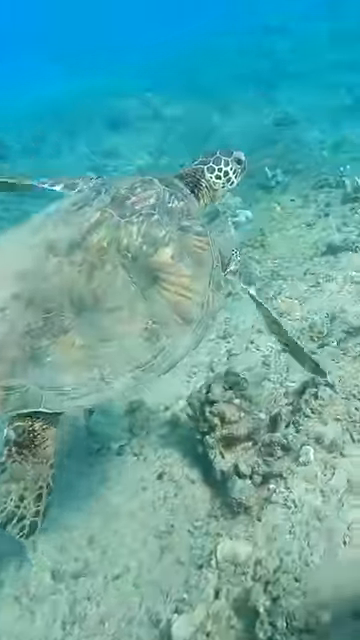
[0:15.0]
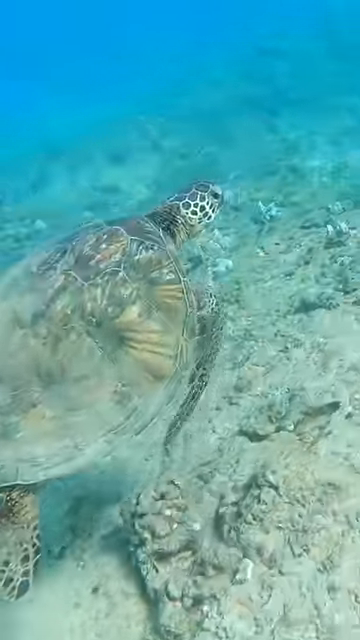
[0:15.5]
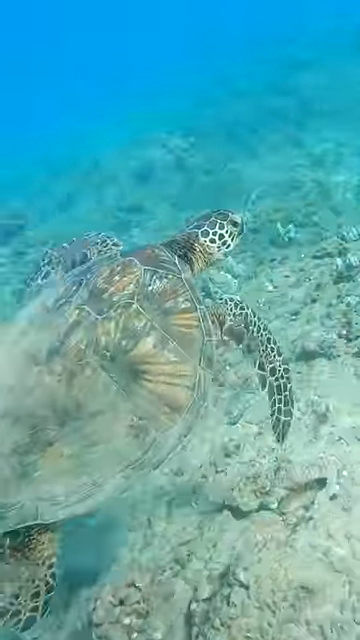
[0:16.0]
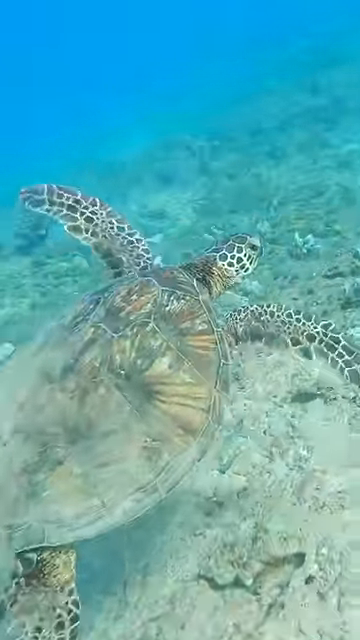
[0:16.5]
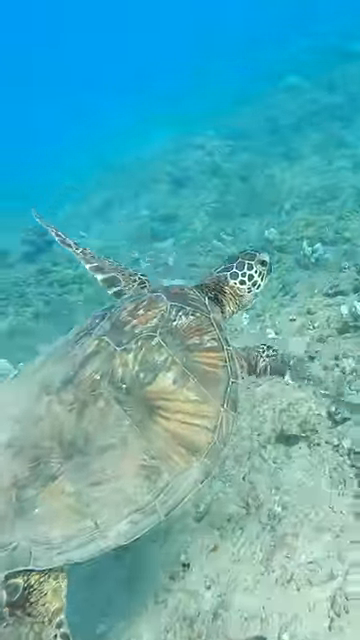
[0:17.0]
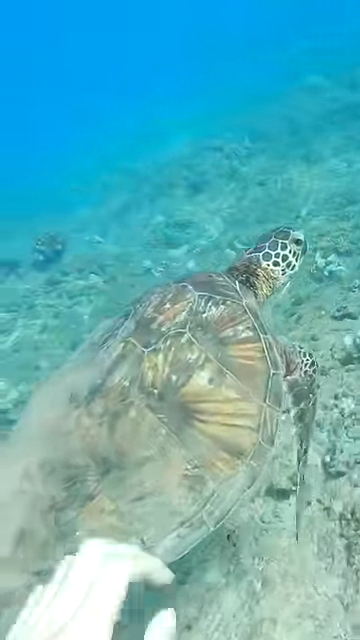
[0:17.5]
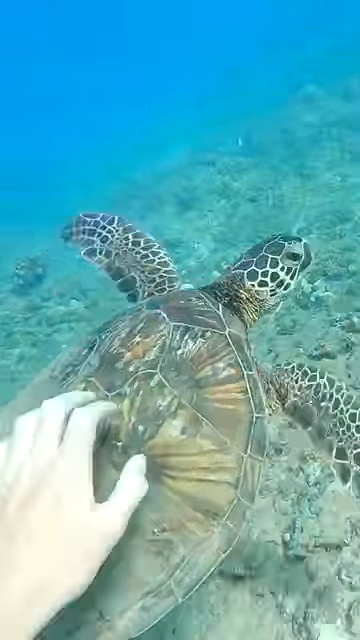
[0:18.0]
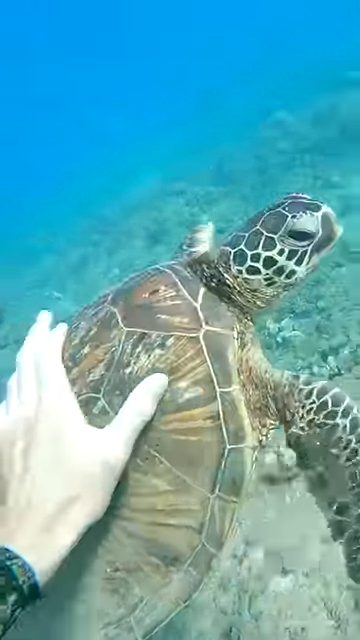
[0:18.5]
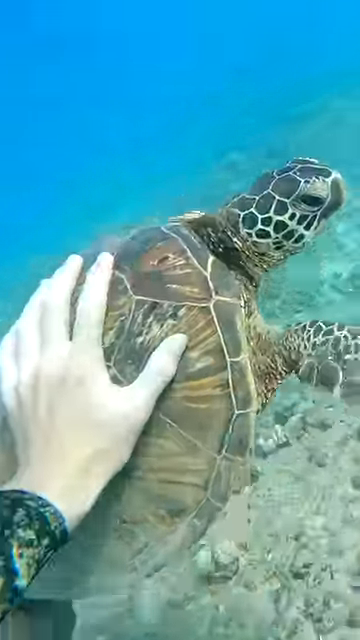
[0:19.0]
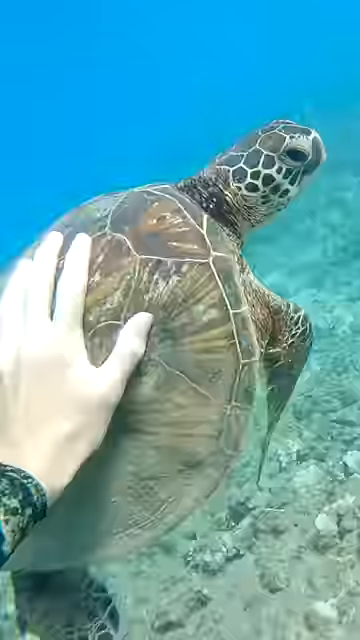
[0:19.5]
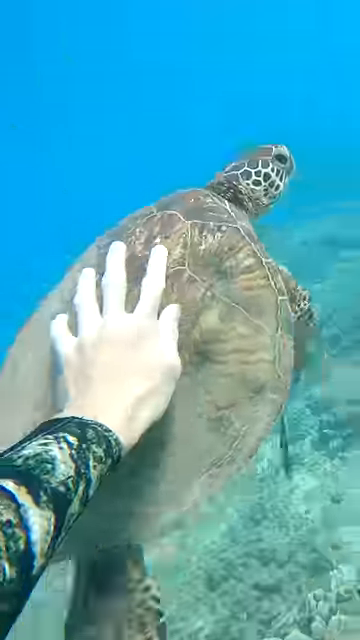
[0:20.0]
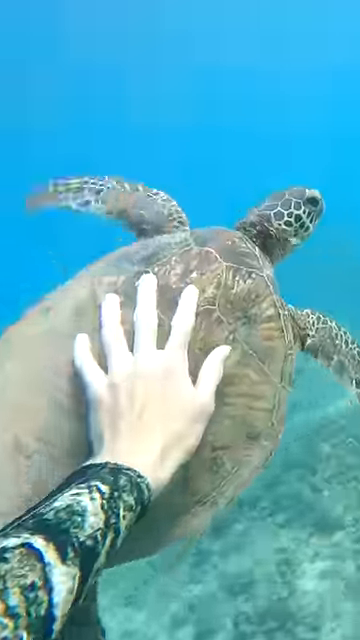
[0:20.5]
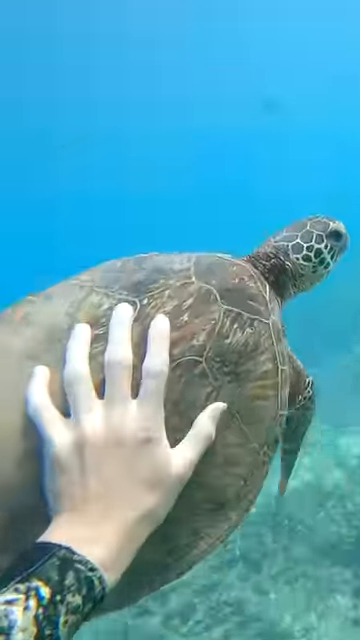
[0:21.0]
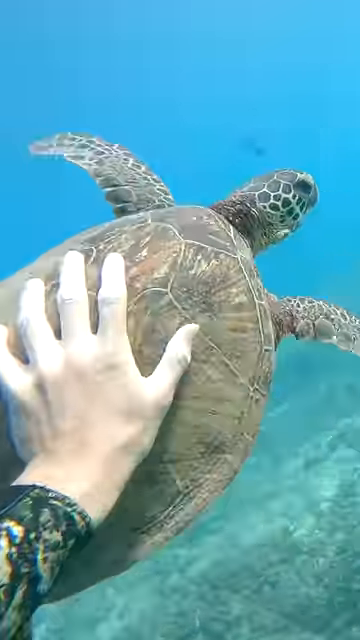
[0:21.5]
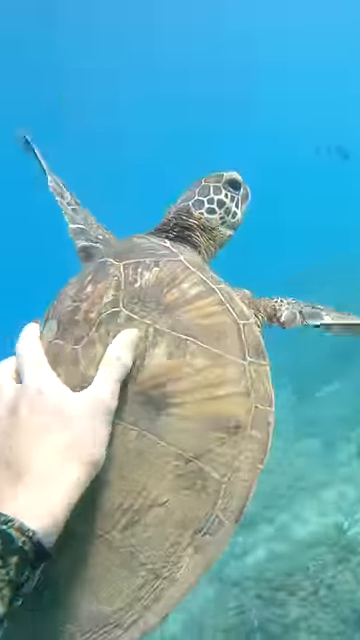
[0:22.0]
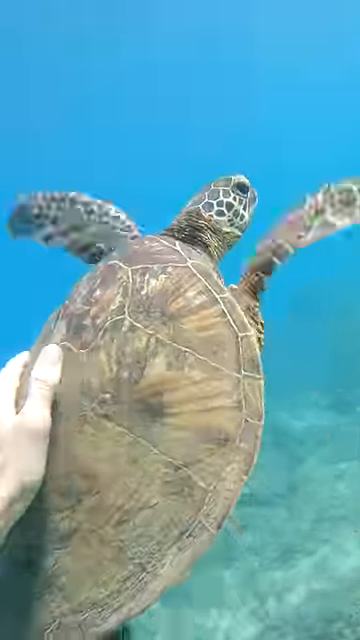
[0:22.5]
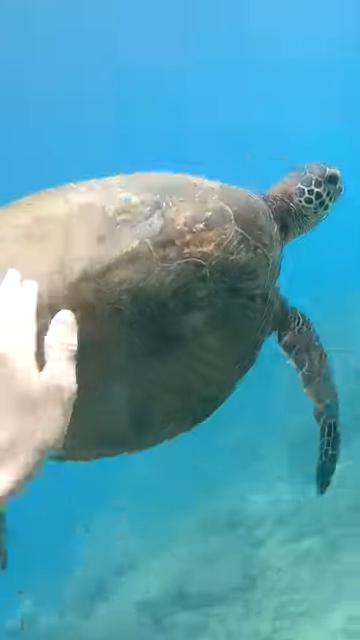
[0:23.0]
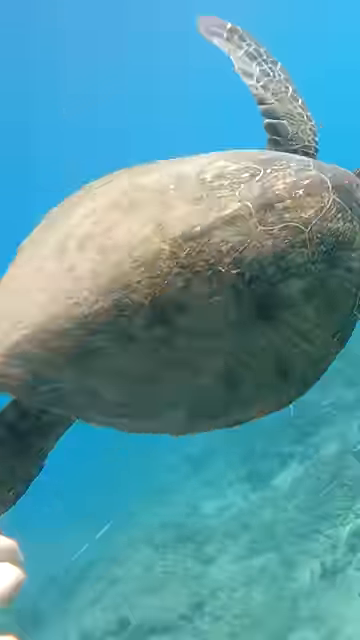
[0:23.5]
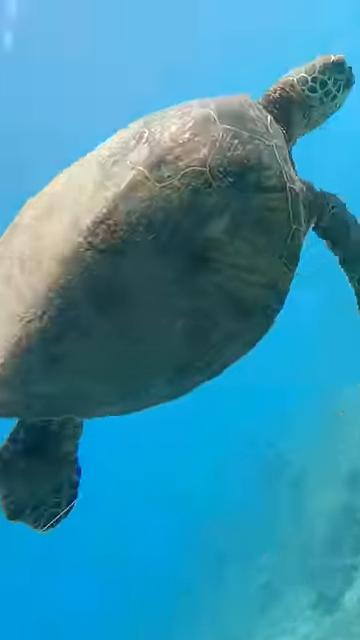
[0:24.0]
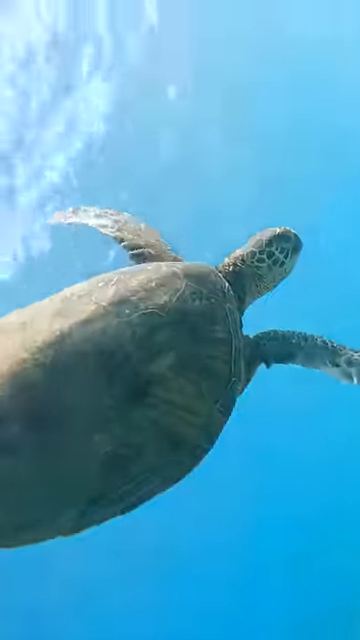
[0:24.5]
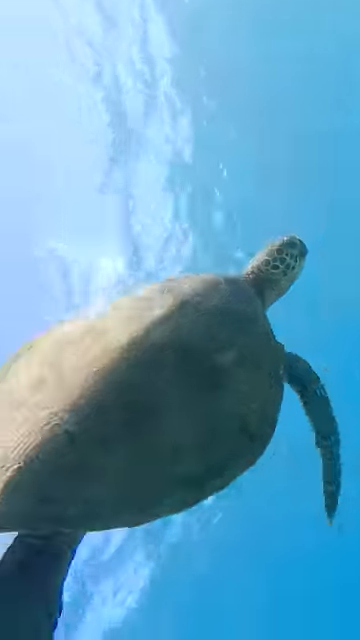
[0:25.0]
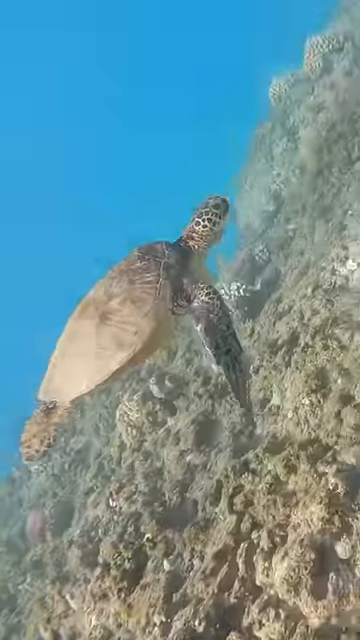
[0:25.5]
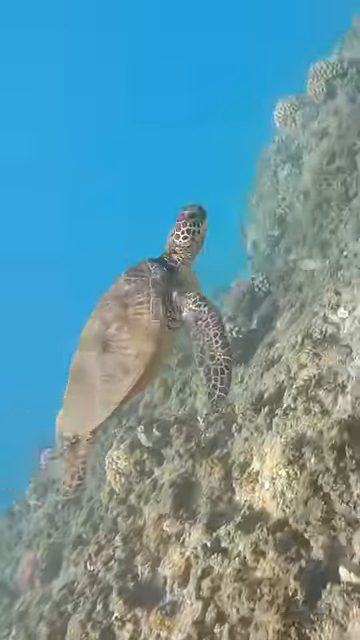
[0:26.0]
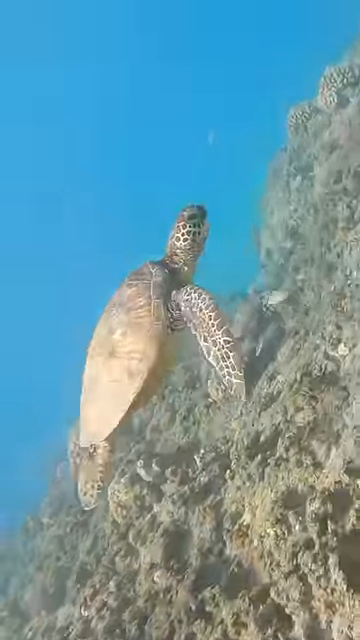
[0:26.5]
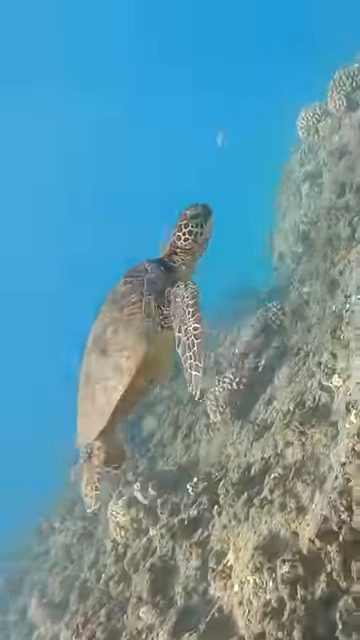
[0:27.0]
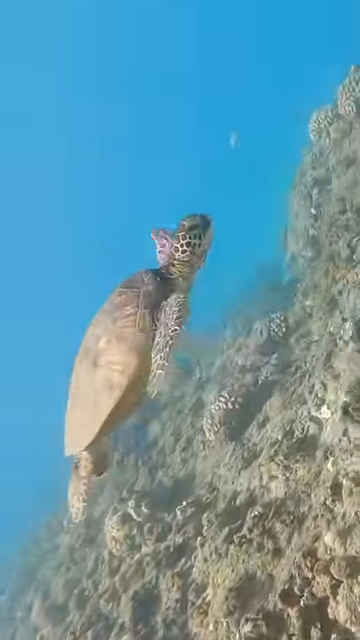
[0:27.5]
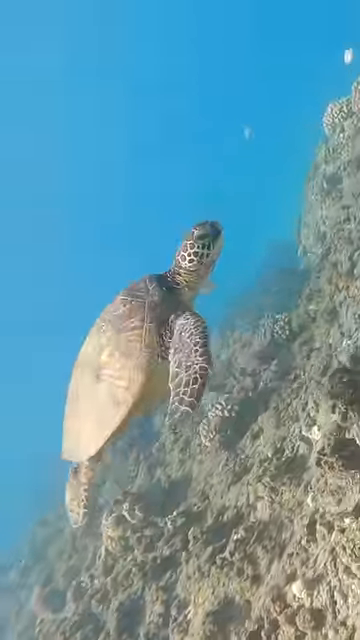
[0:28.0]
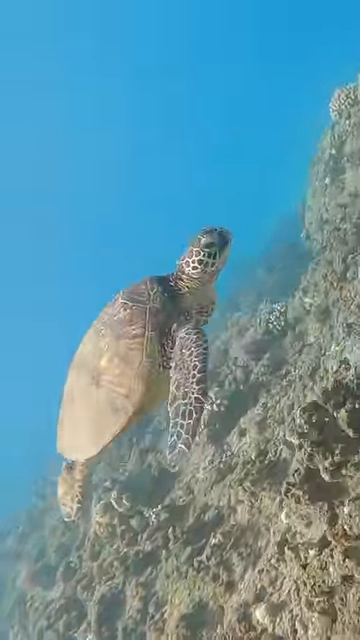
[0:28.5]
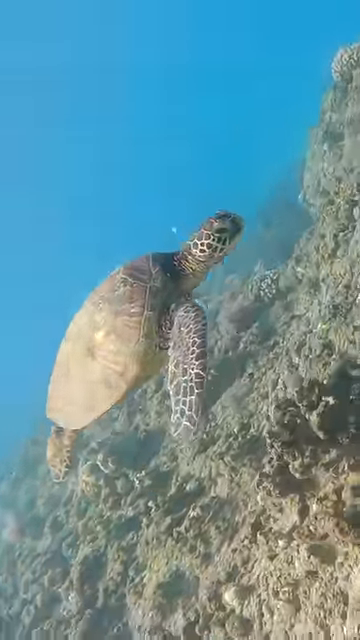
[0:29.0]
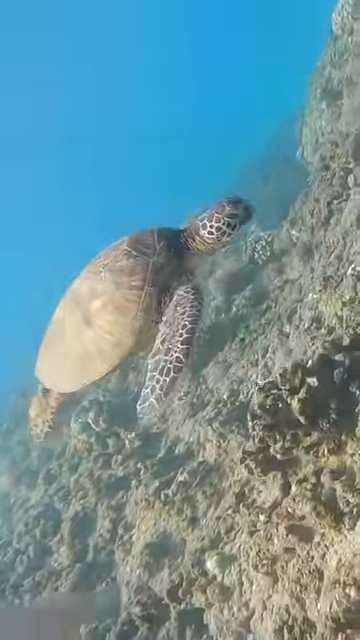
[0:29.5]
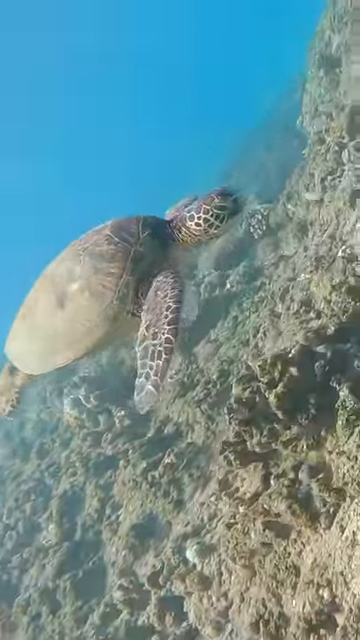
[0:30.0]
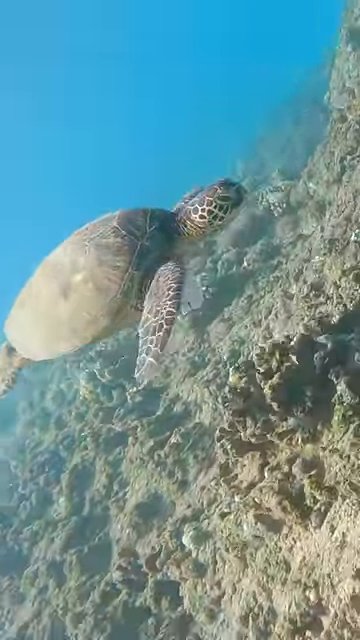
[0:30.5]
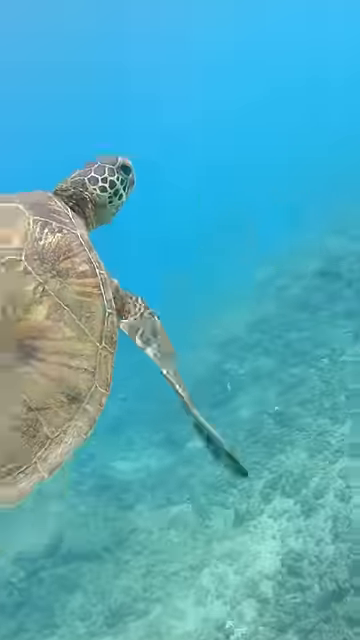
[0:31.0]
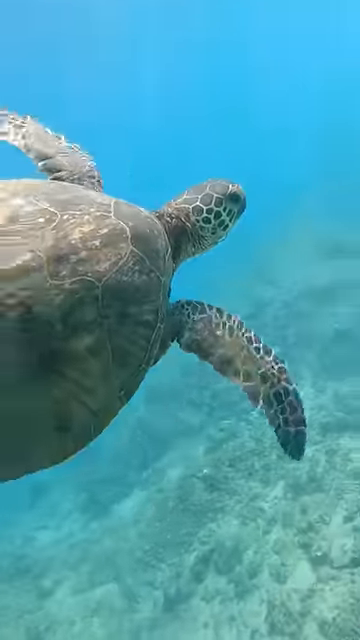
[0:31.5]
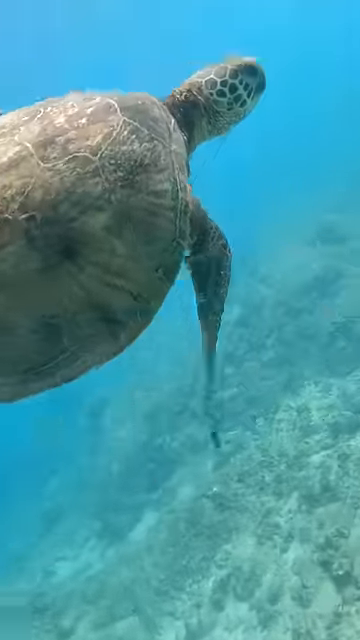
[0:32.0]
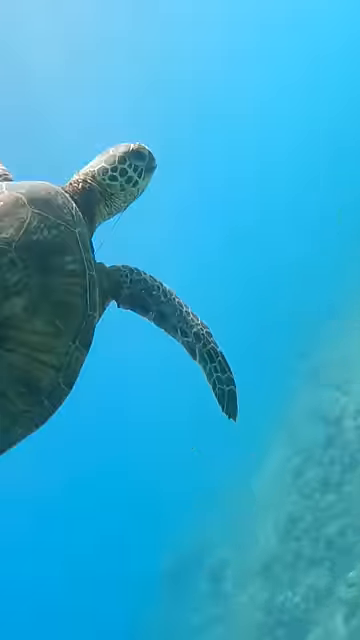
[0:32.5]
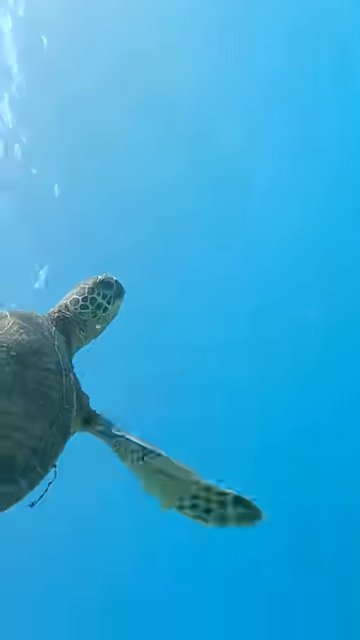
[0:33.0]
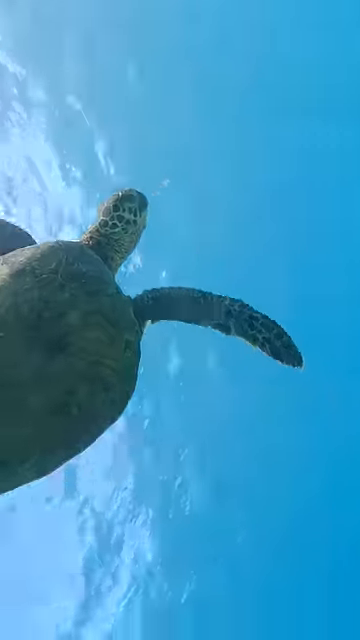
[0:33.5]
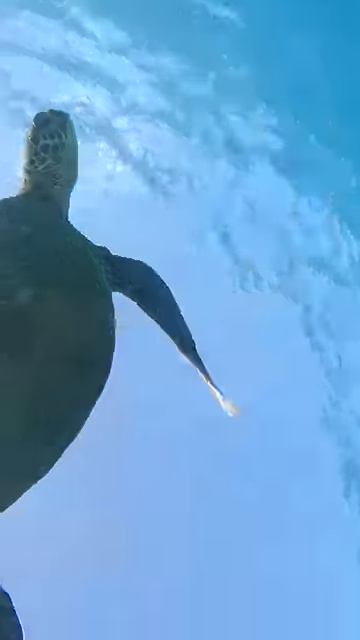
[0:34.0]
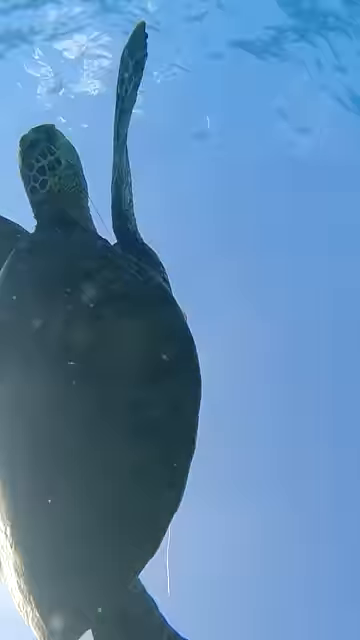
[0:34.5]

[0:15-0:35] A swimmer appears to be snorkeling in ocean waters that are very blue and bright. The filmer follows a sea turtle that appears to be maneuvering through the water, its top fins guiding it while its back fins help it move forward. The filmer grabs the back of the sea turtle, which appears to slightly irritate the animal; it accelerates slightly and moves as if trying to get away from the snorkeler's touch. Its motions speed up upon being touched by the videographer.